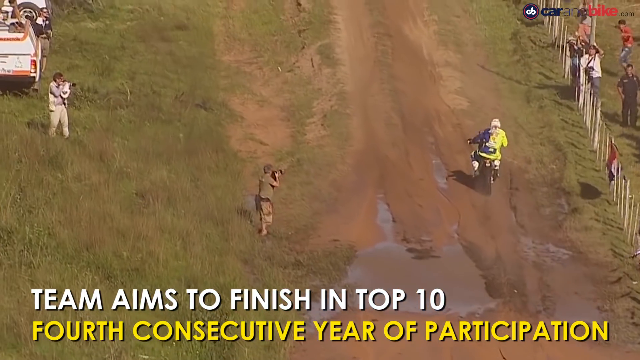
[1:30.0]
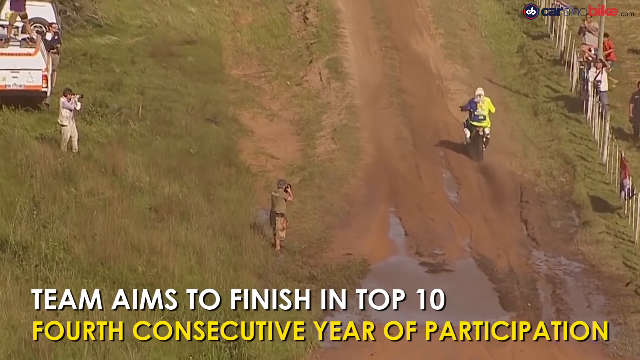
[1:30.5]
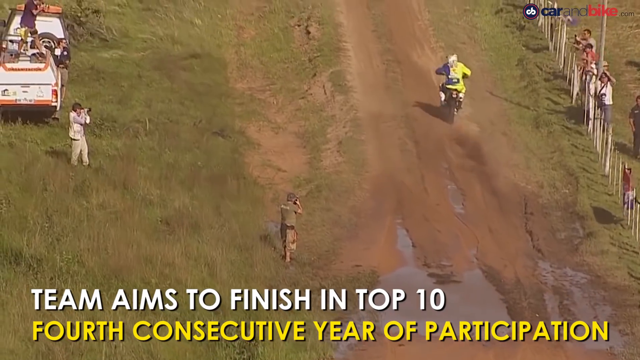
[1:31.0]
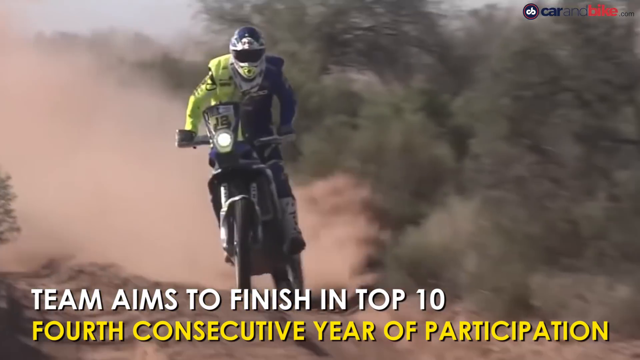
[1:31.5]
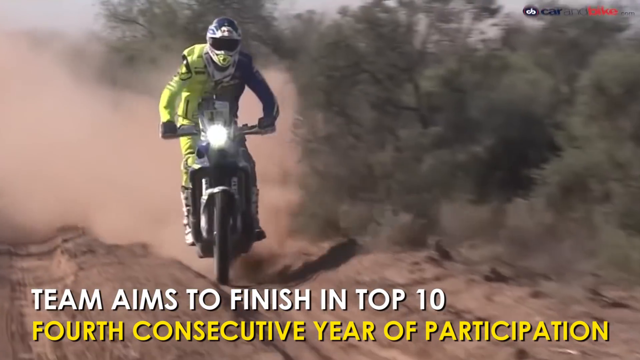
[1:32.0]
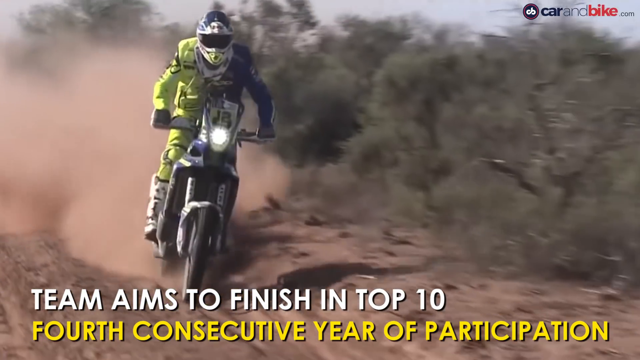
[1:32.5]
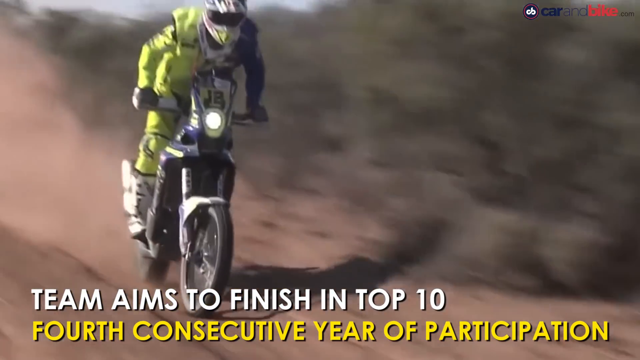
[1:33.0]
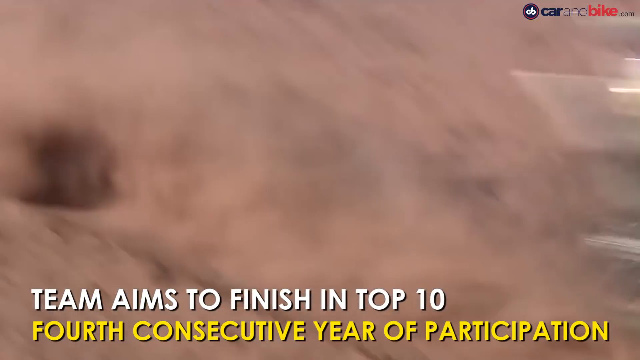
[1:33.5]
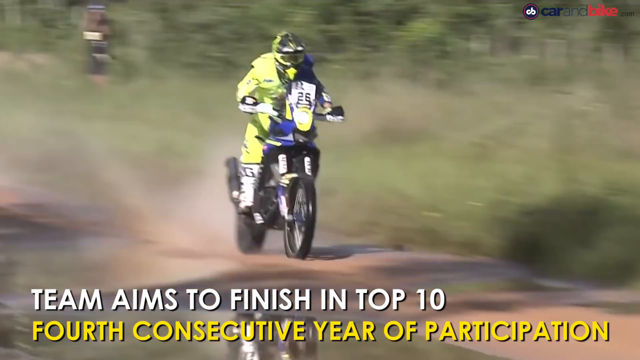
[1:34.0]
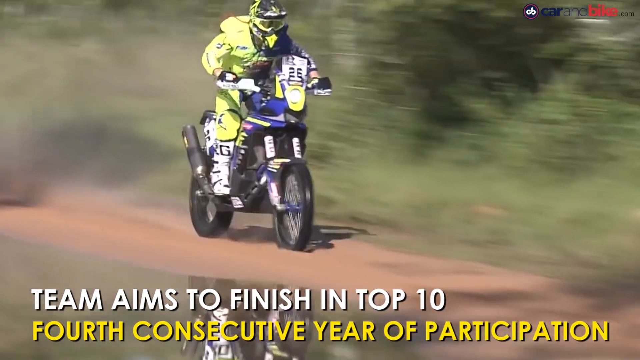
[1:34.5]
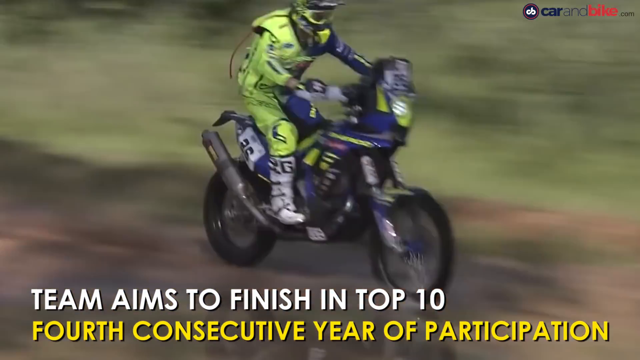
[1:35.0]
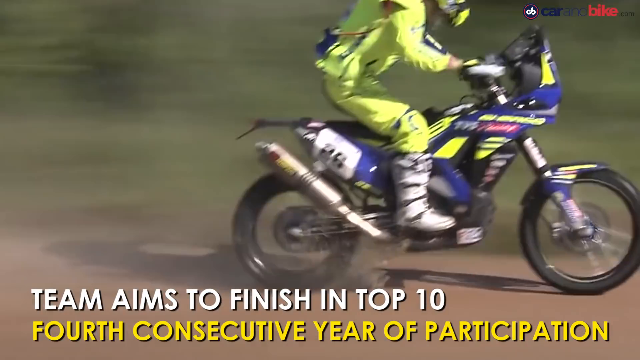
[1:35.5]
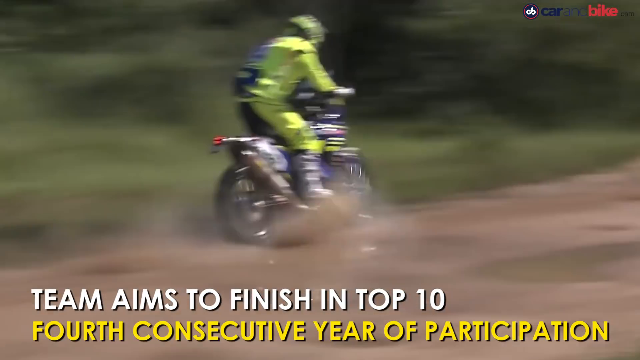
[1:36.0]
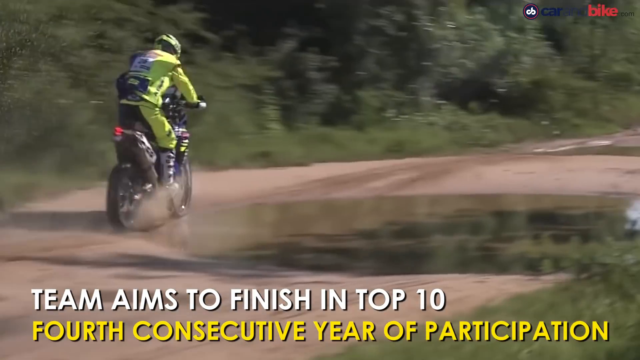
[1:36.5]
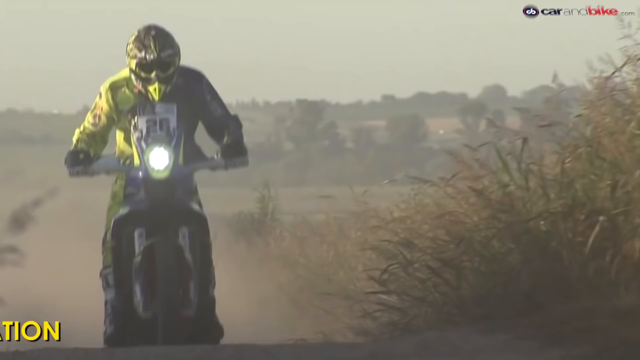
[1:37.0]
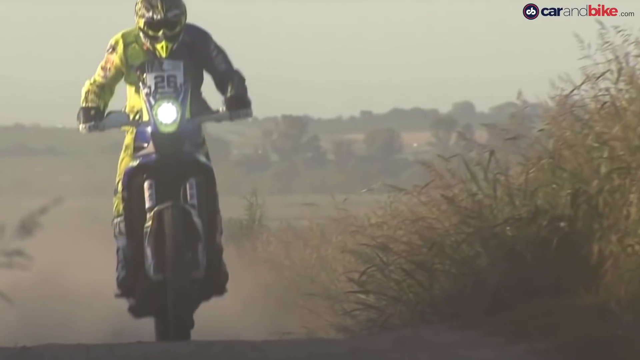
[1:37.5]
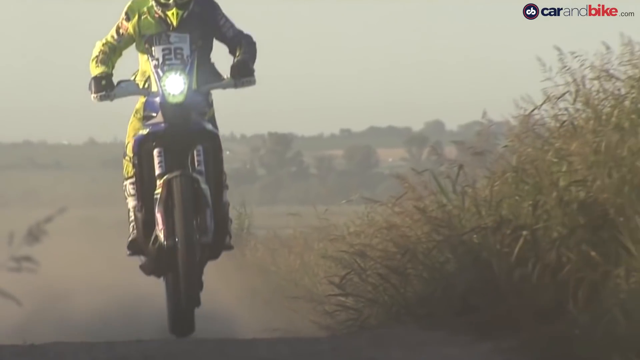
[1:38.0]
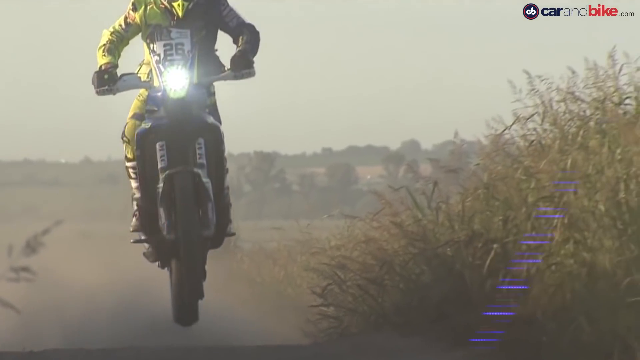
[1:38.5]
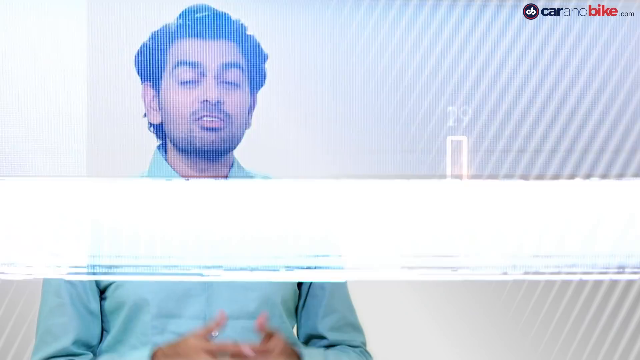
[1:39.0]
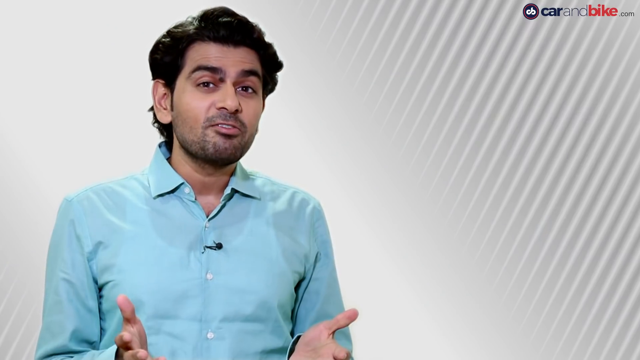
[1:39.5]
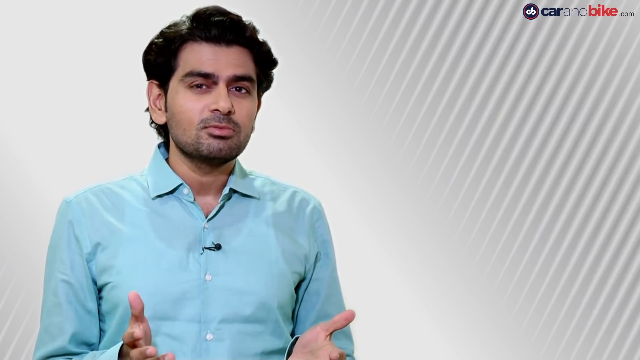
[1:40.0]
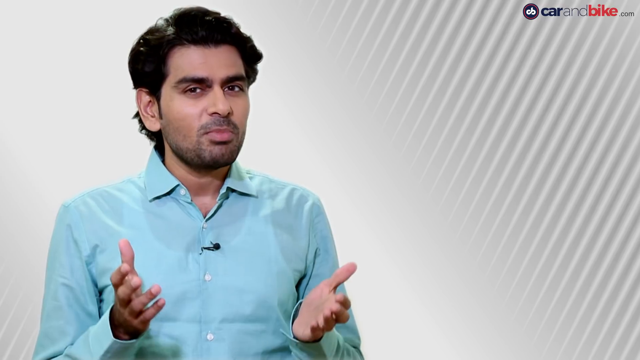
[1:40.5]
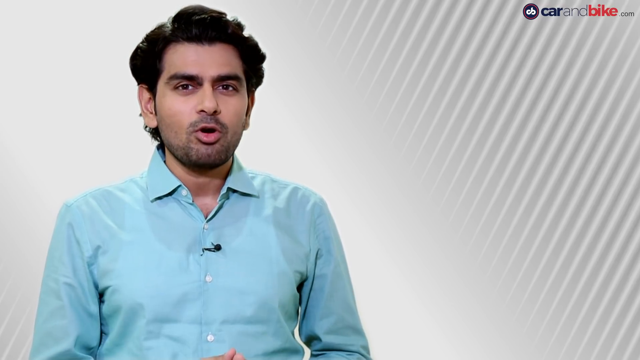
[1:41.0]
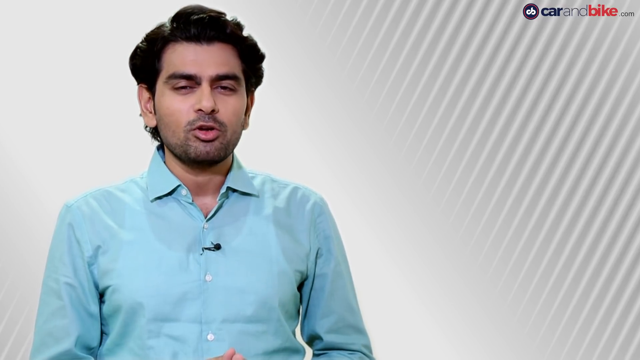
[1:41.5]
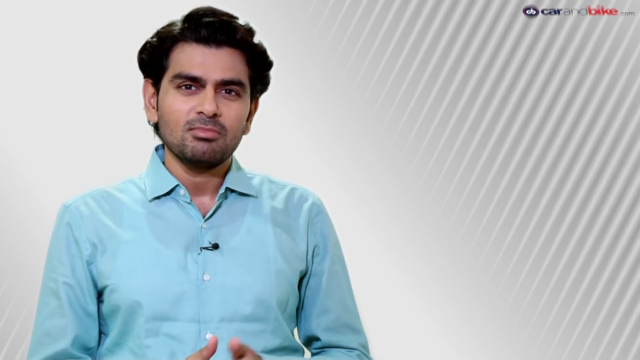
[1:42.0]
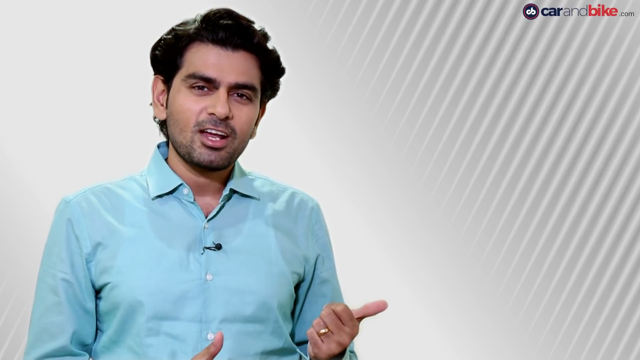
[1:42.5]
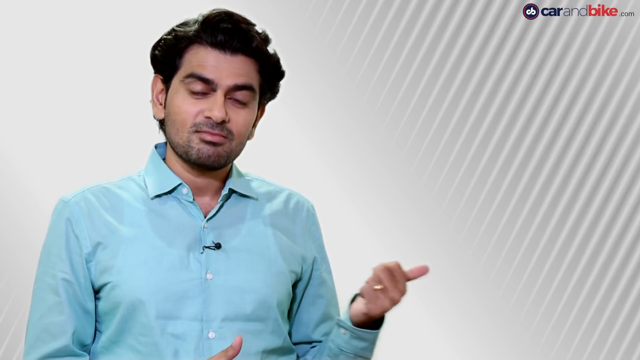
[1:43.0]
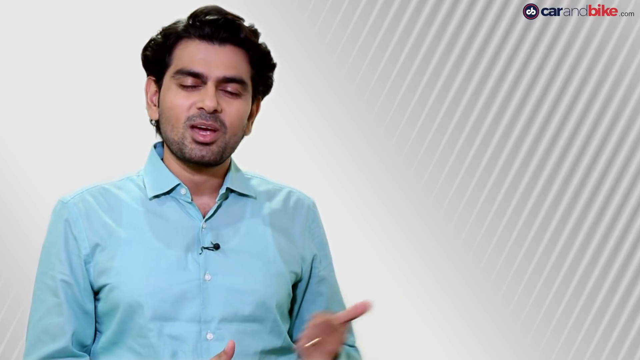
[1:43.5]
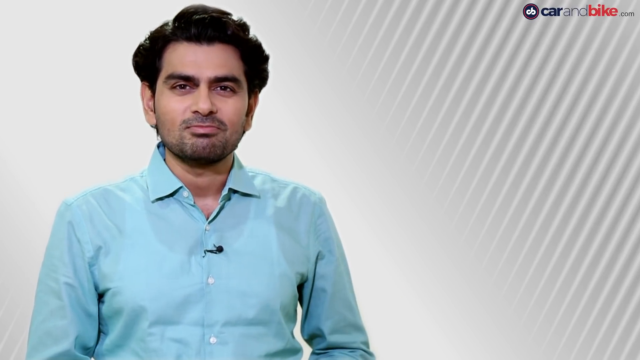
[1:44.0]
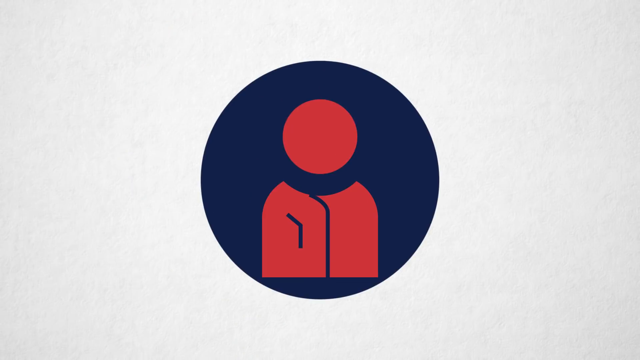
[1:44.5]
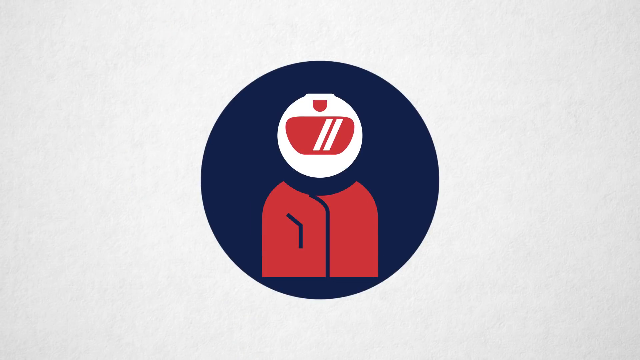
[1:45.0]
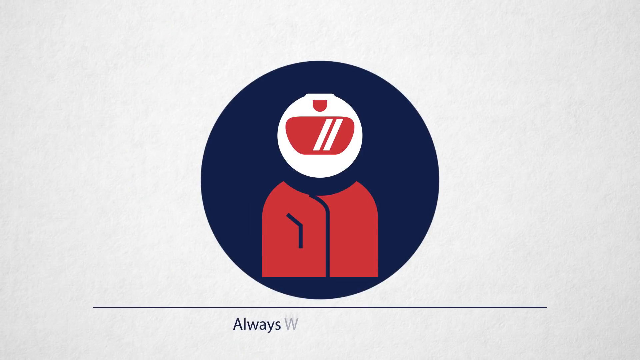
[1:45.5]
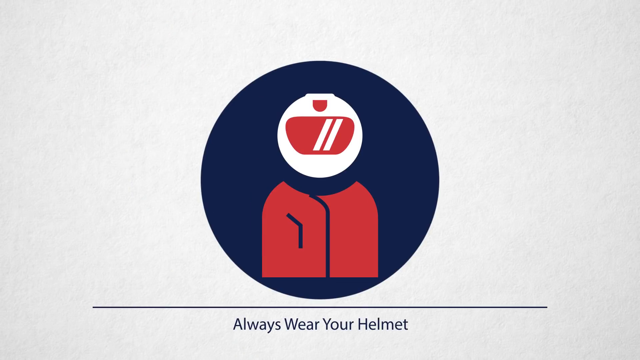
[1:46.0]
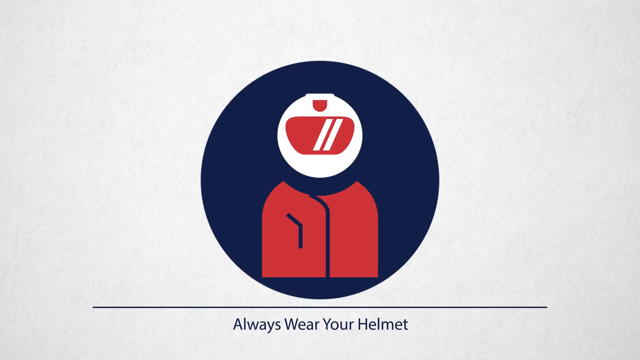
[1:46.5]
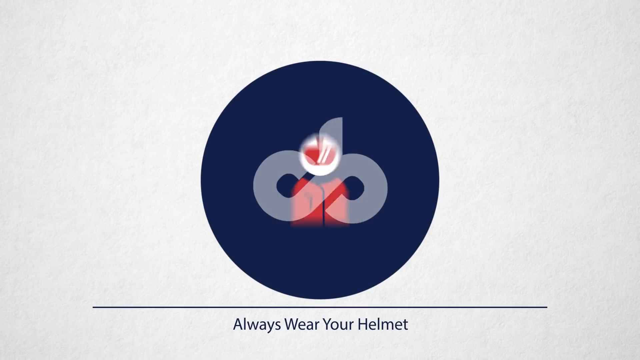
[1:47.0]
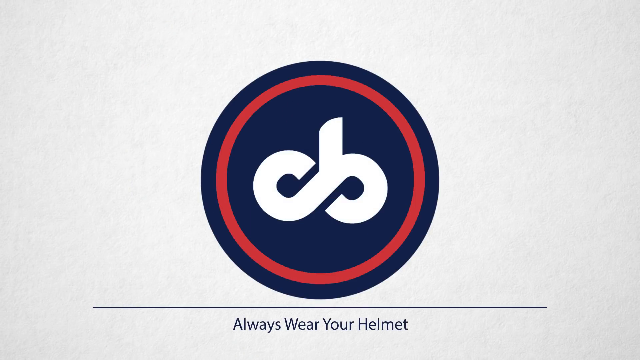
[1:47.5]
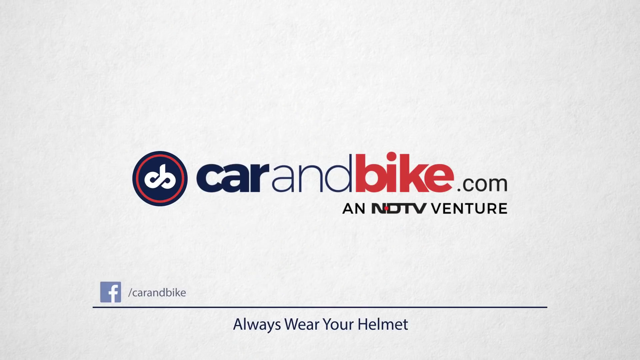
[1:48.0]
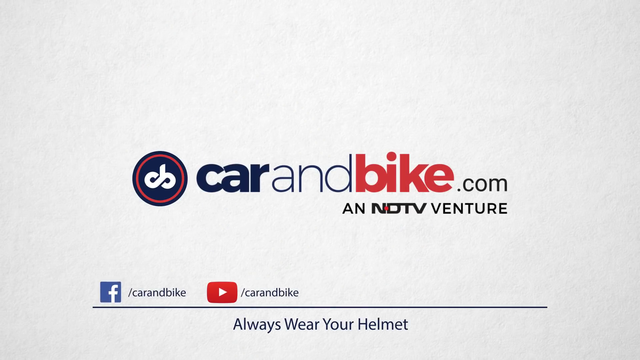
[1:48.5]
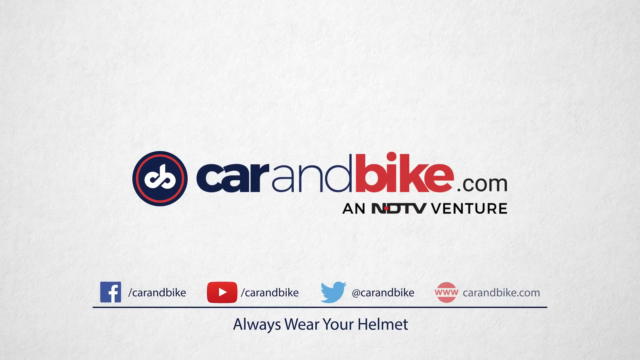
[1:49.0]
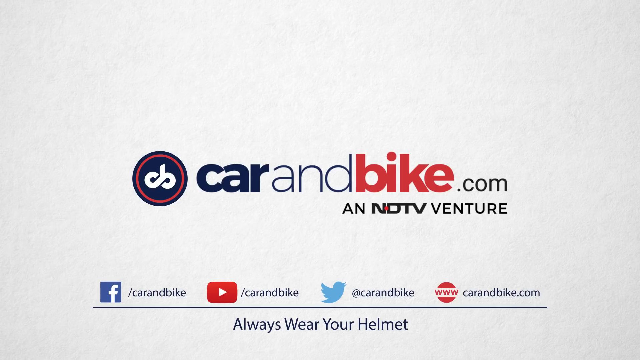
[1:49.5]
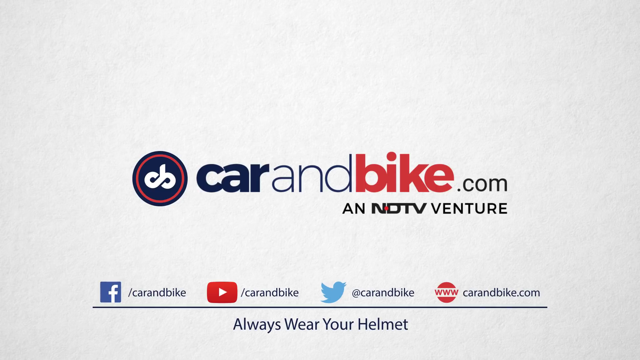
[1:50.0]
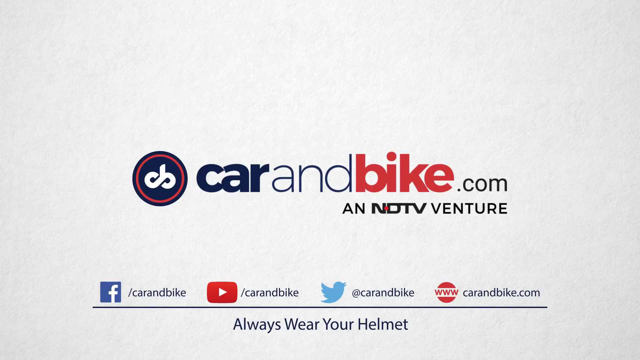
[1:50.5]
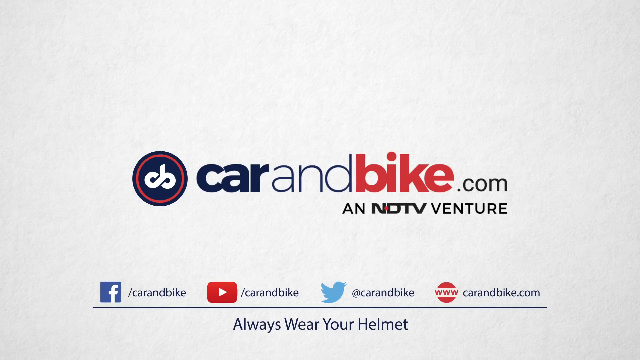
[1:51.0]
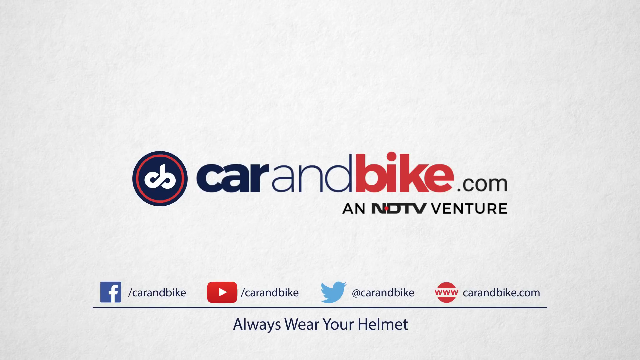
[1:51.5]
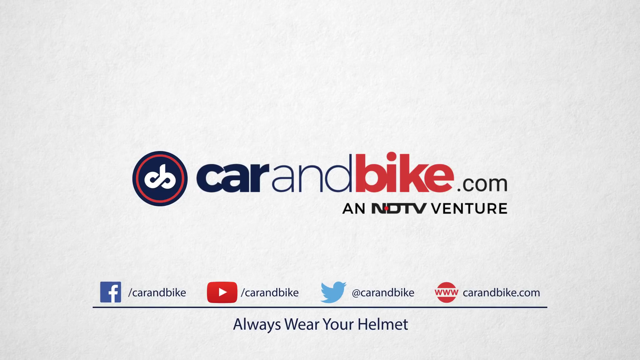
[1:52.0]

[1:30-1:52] The Dakar Rally section concludes, and an added video-effect cut shows the presenter on screen talking to the camera under professional lighting, wearing a light blue shirt. The carandbike.com logo appears. The final screen shows a public safety announcement reminding viewers to always wear their helmet, followed by the carandbike.com logo and the Car and Bike social media accounts for Facebook, YouTube and Twitter, along with the website.